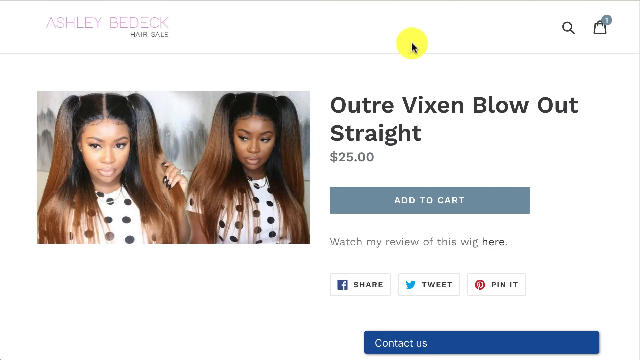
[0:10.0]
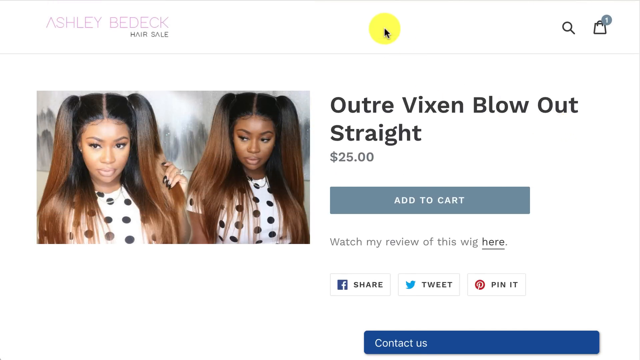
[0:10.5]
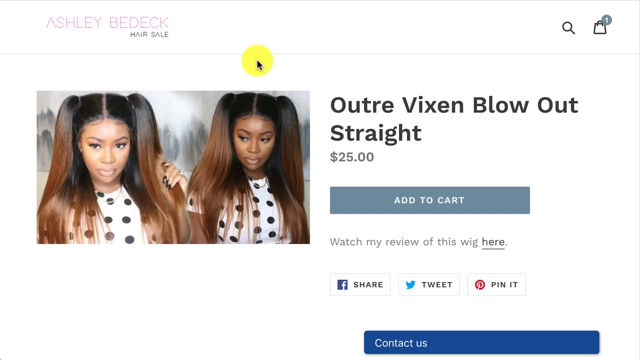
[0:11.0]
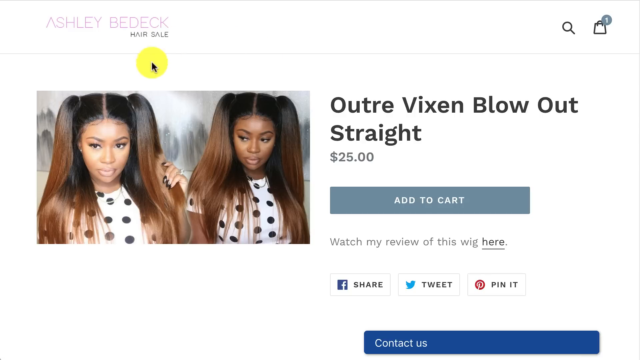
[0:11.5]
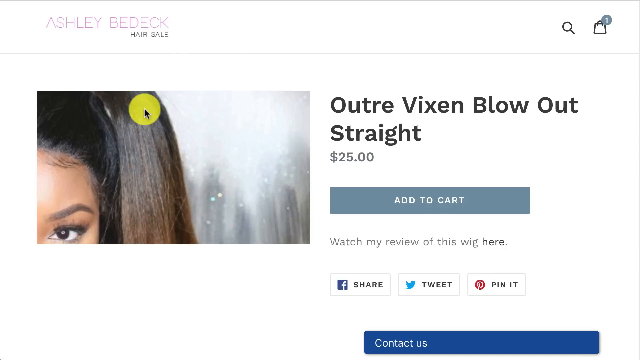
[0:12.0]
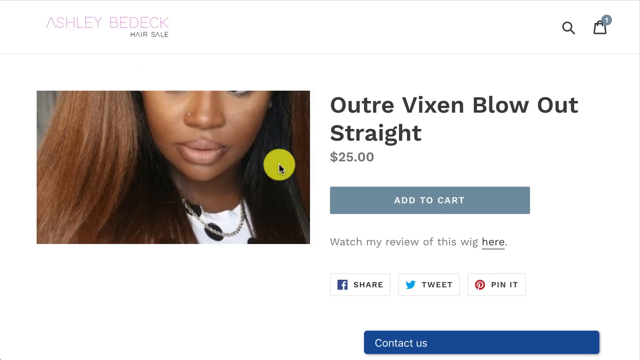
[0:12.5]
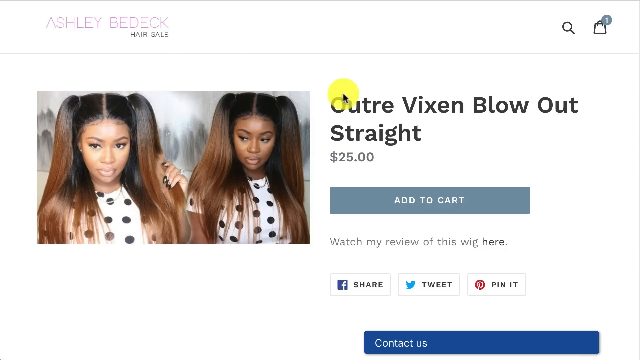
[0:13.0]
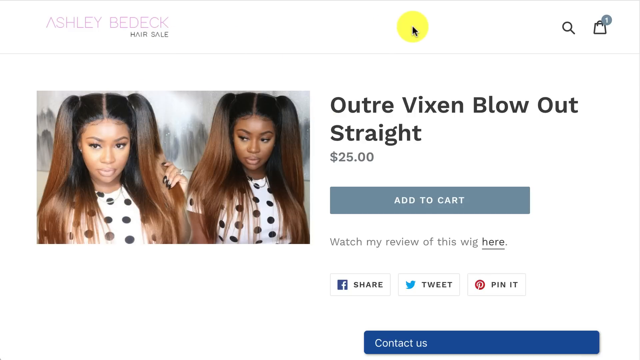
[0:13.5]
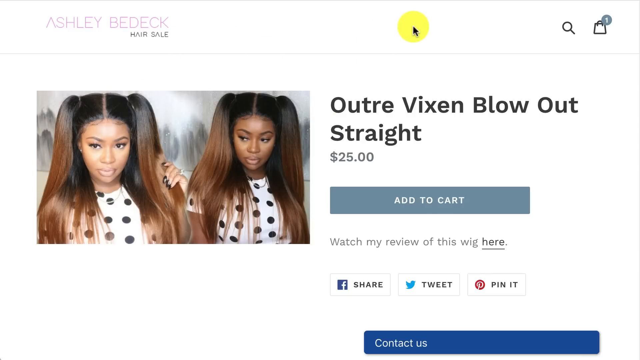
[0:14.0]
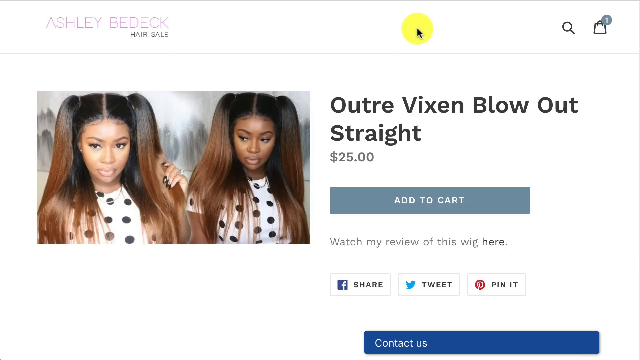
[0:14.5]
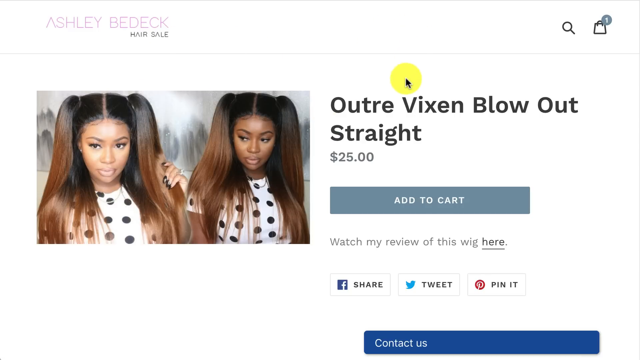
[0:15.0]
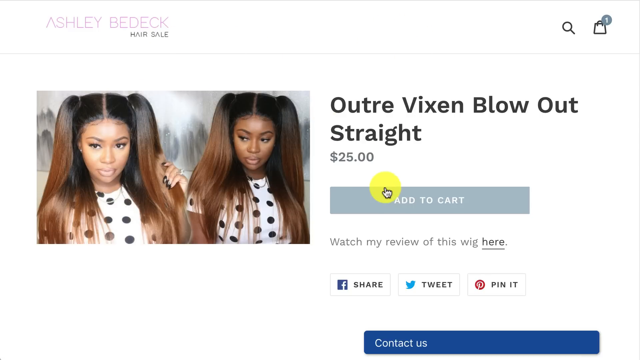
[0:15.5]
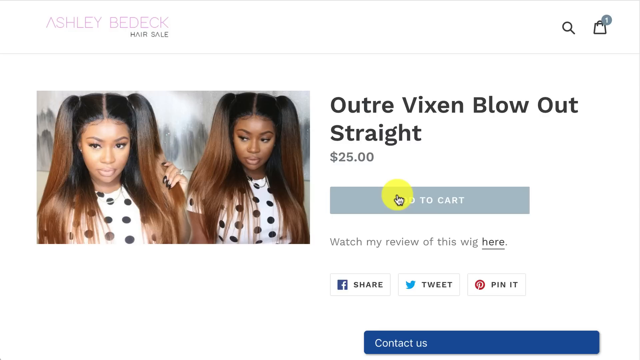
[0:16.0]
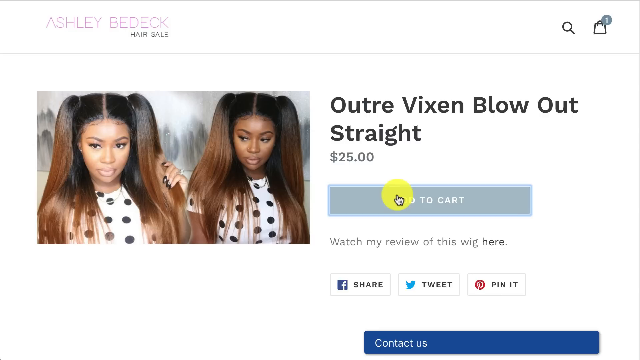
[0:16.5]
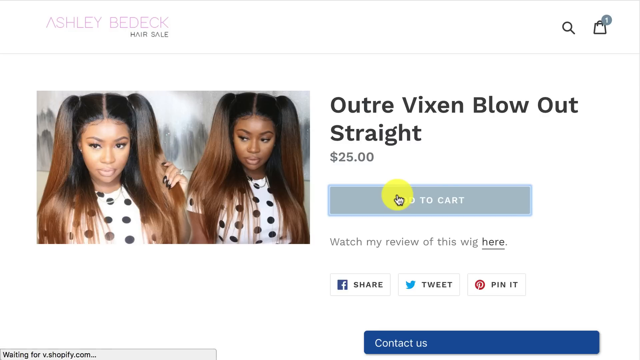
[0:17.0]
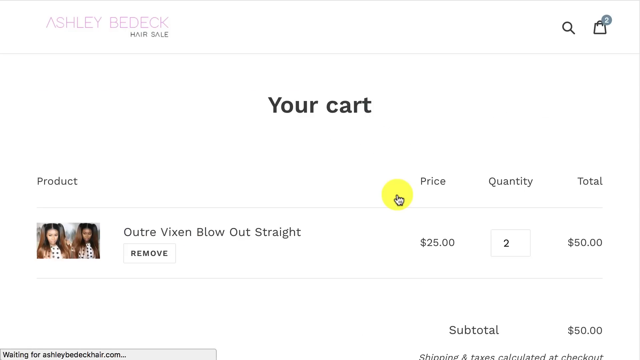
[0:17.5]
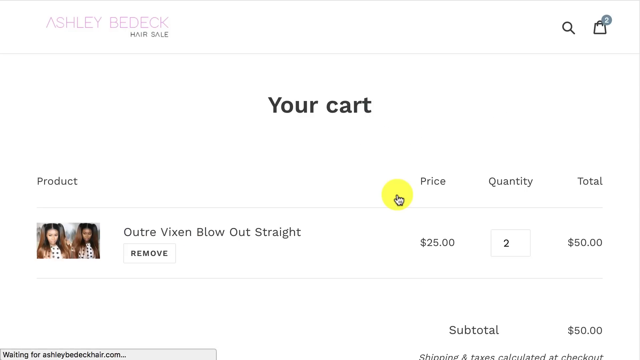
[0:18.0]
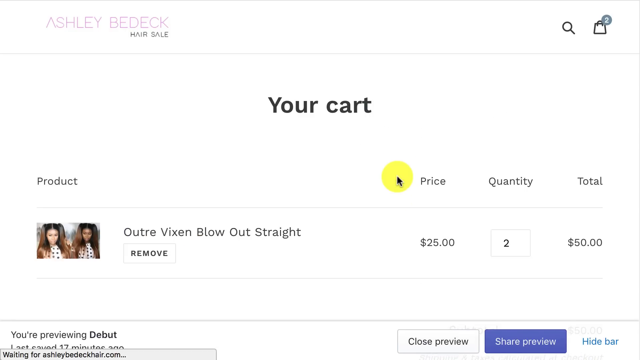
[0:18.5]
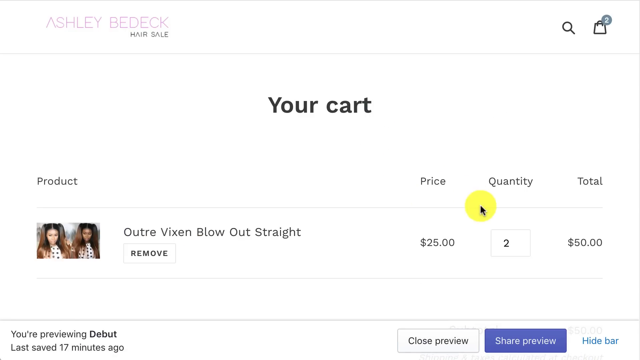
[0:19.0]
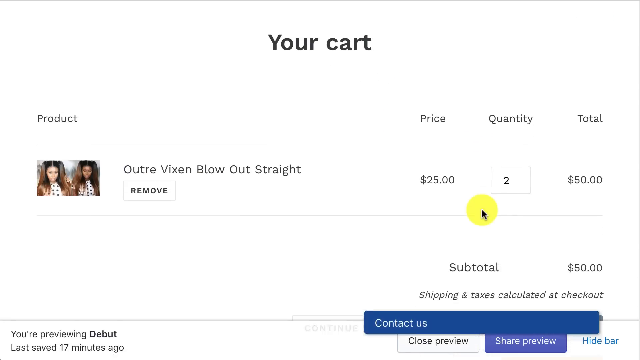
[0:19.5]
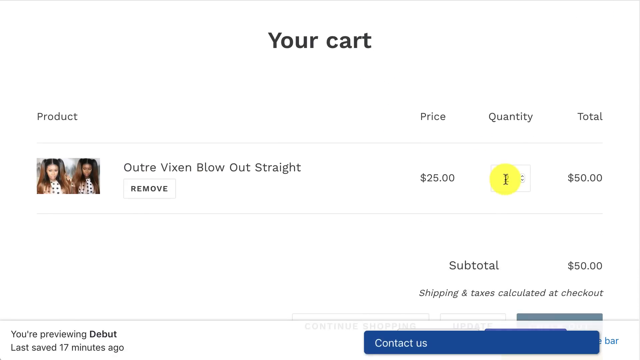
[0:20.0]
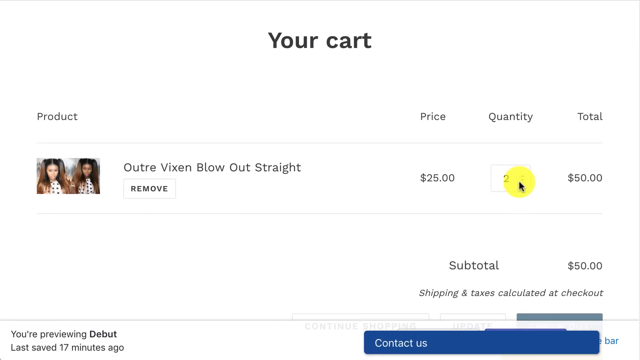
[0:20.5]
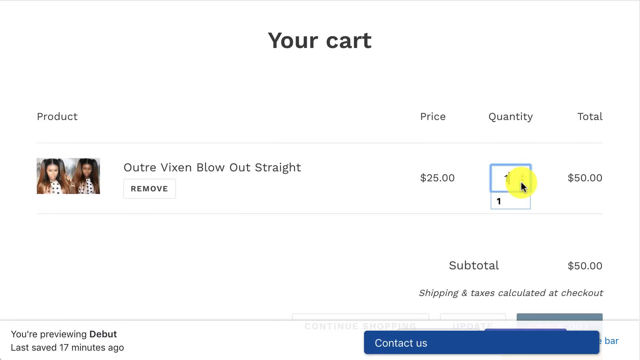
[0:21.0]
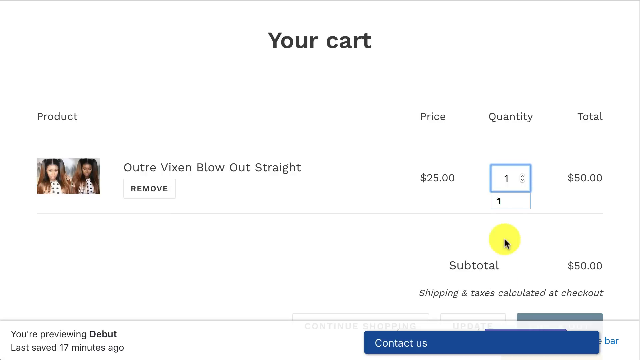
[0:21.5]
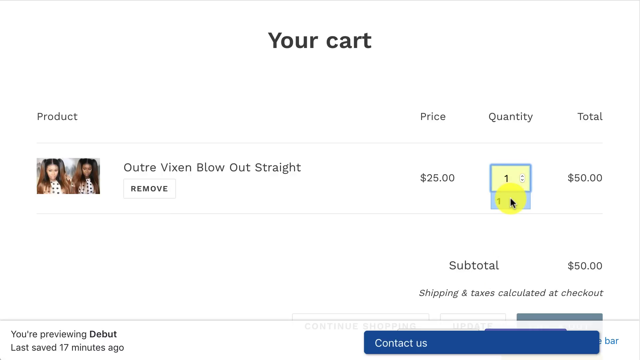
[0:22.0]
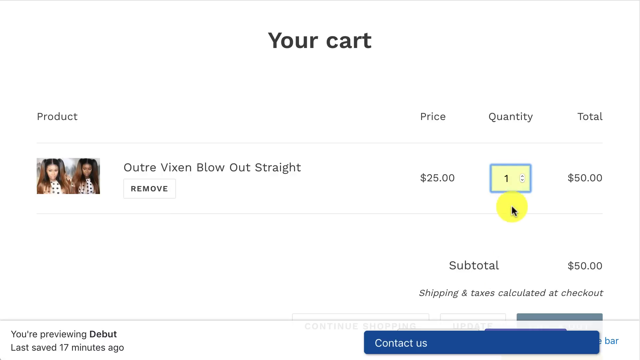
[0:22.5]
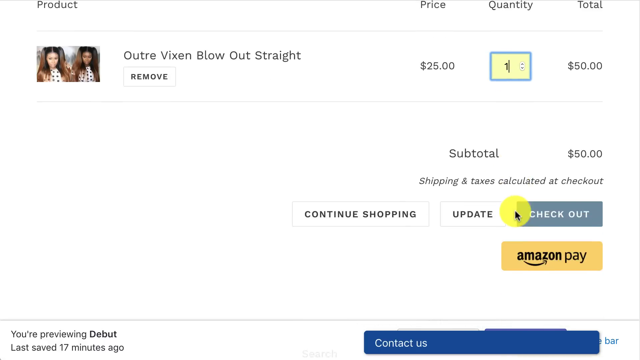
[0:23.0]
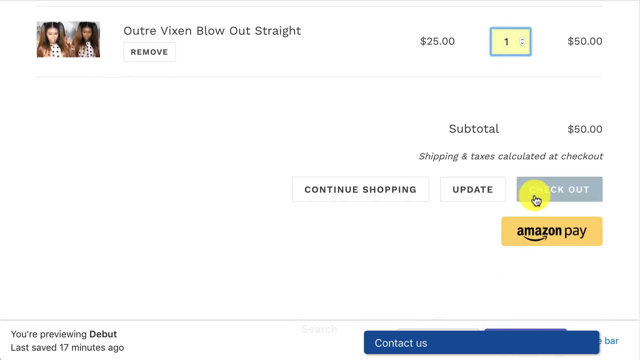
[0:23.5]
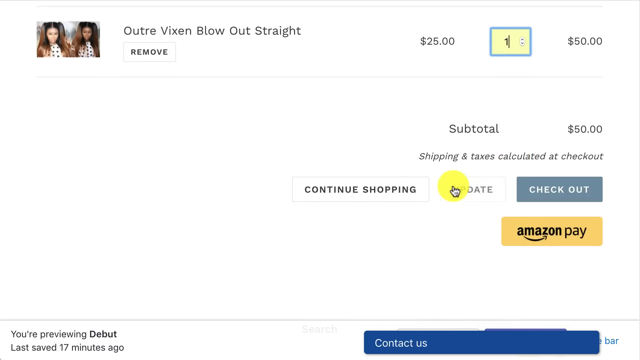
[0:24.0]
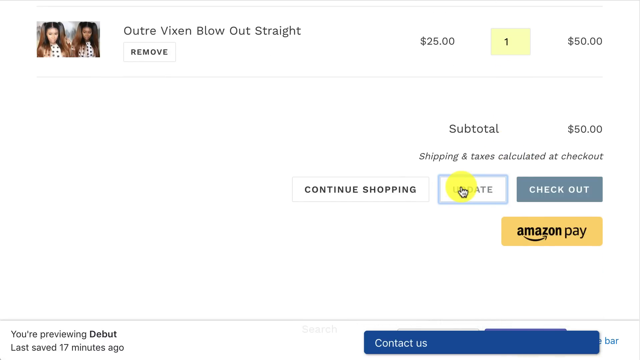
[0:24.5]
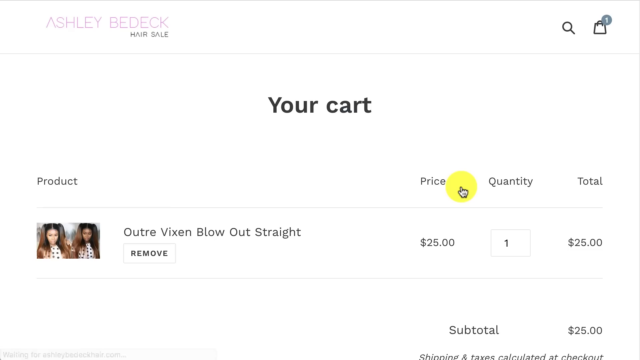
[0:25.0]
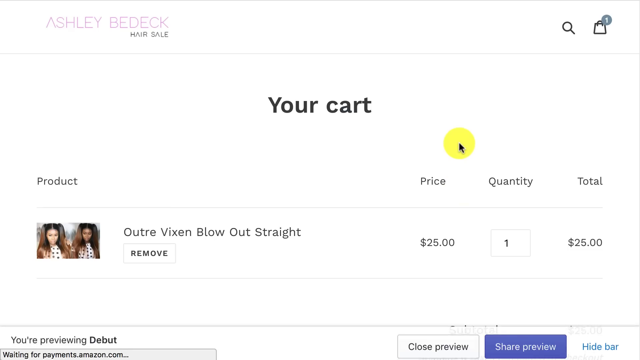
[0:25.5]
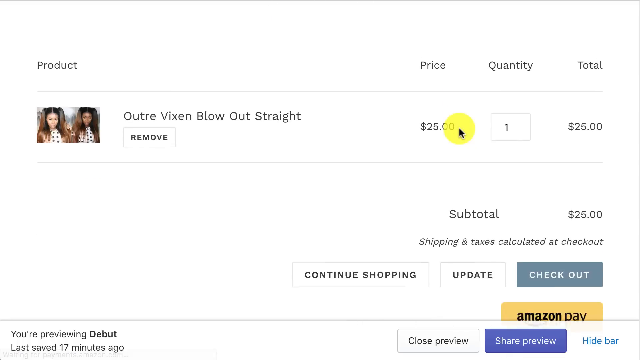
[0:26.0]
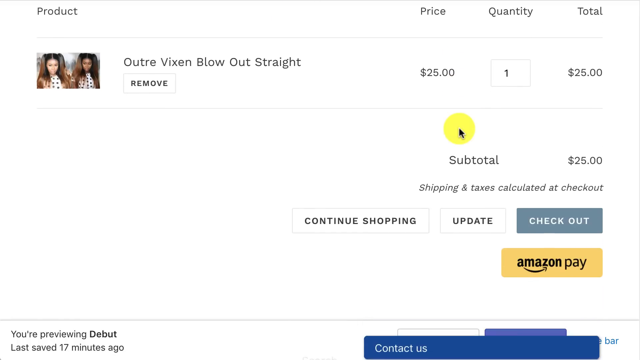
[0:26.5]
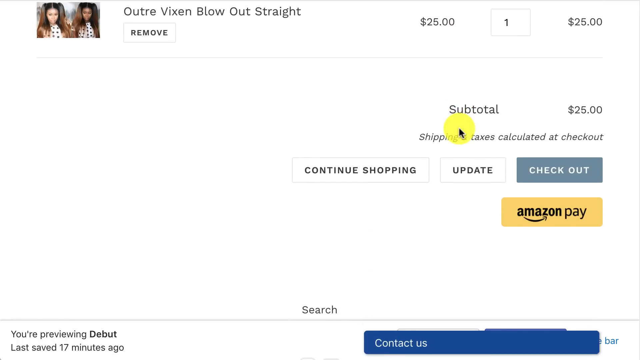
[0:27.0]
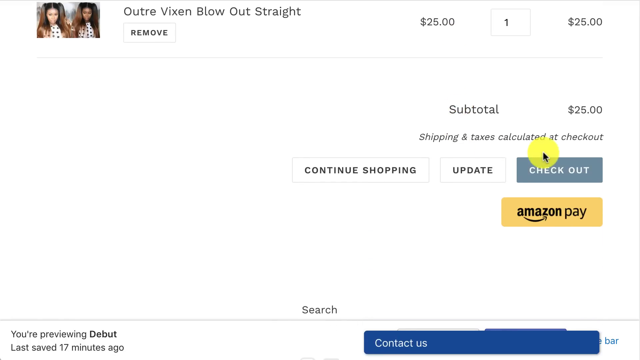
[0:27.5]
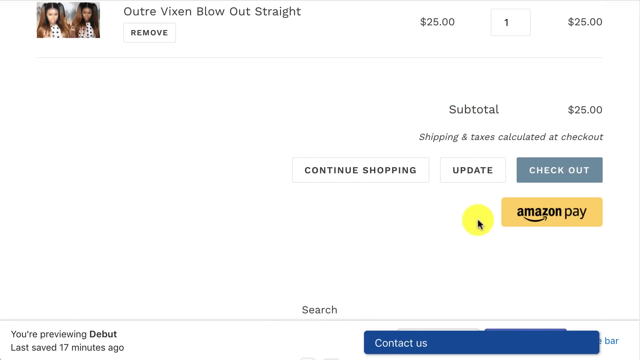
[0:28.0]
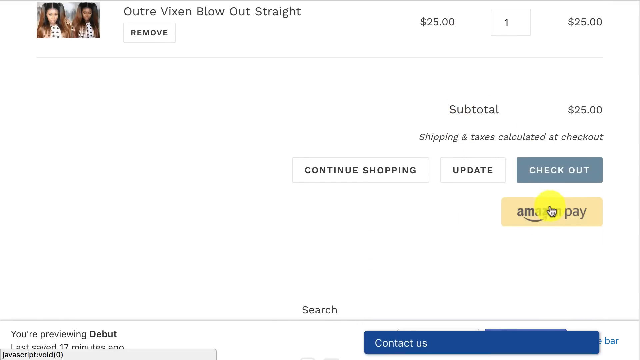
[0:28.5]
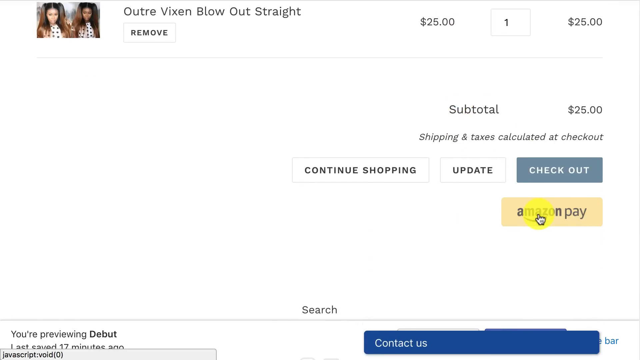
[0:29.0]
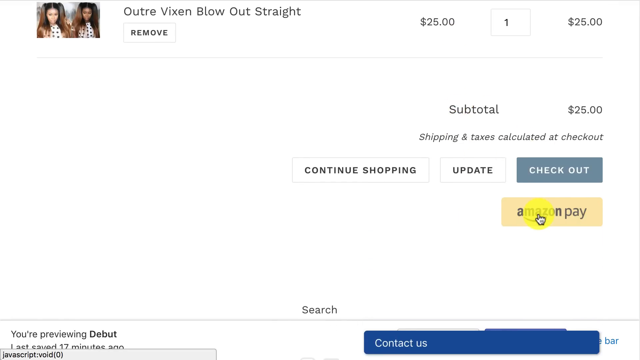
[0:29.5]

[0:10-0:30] The same website with the wig remains on screen, and the yellow dot marking the mouse cursor moves all around the screen. The cursor is moved onto the picture to zoom in and show the texture of the hair, then moves off the picture to the add to cart button. The item is added to the cart, and it looks like a quantity of two was added. The screen reads "your cart" and lists the product, the price, the quantity and the total. The mouse scrolls down the screen. The quantity is clicked and one is selected to change the amount, then the cursor goes over the update button and update is selected. Underneath the checkout it says "Amazon Pay."